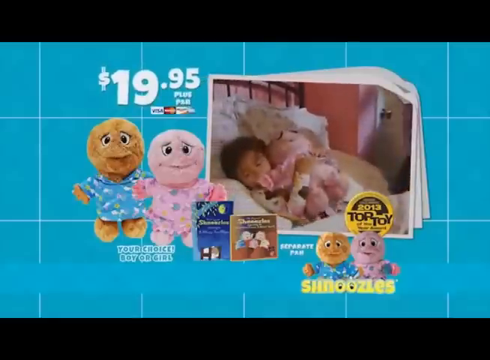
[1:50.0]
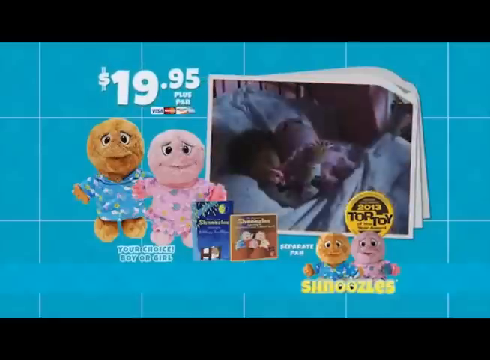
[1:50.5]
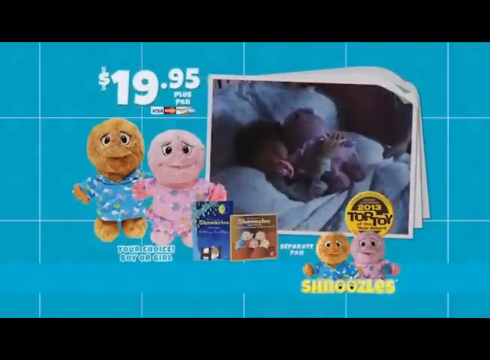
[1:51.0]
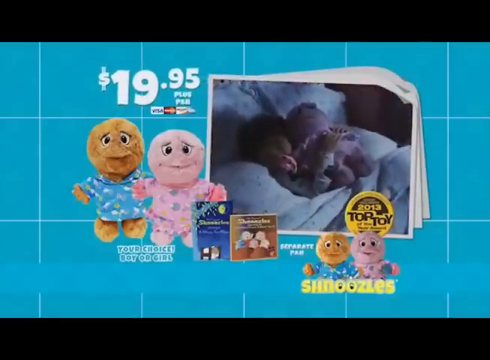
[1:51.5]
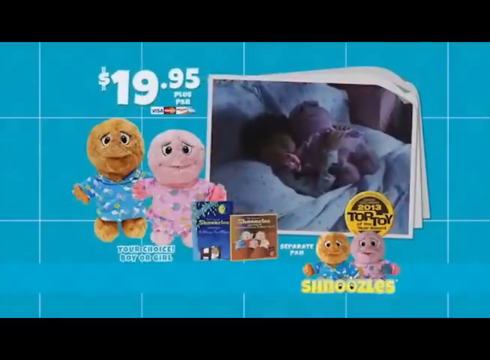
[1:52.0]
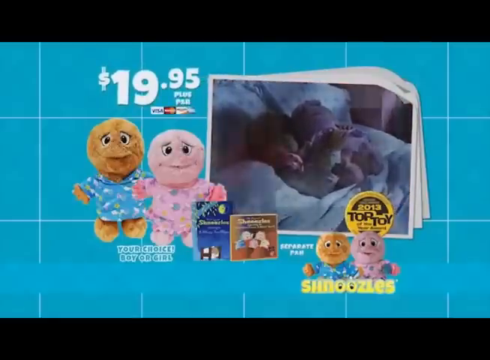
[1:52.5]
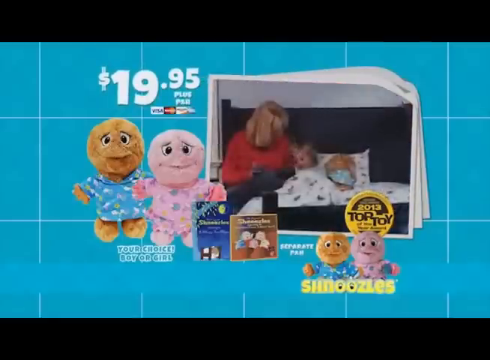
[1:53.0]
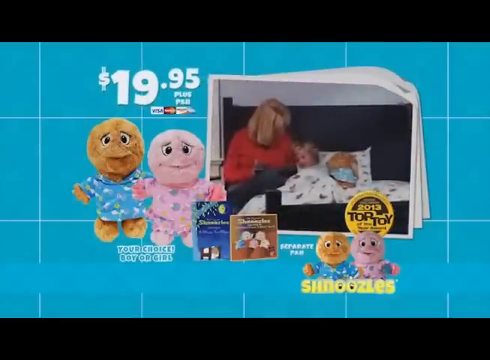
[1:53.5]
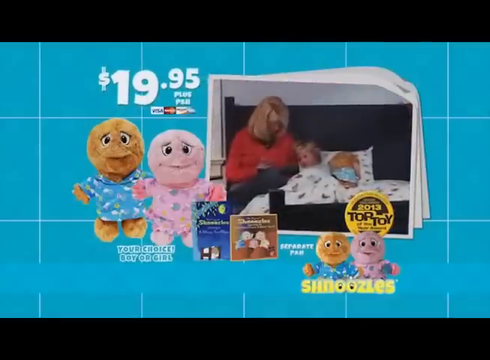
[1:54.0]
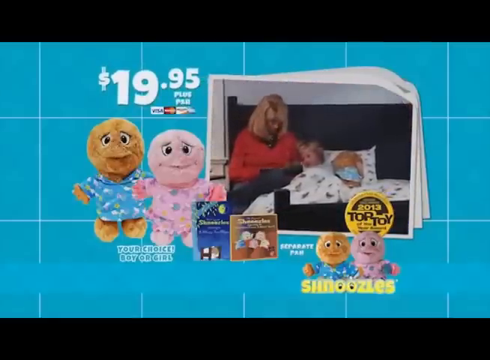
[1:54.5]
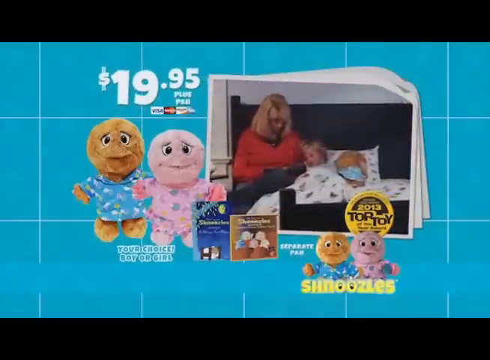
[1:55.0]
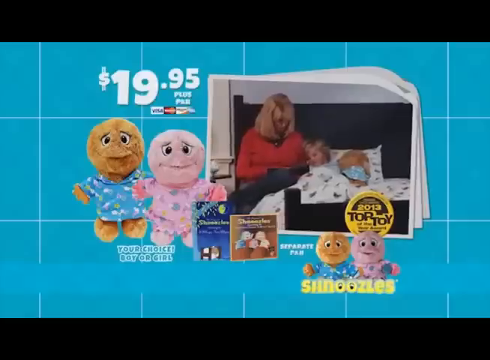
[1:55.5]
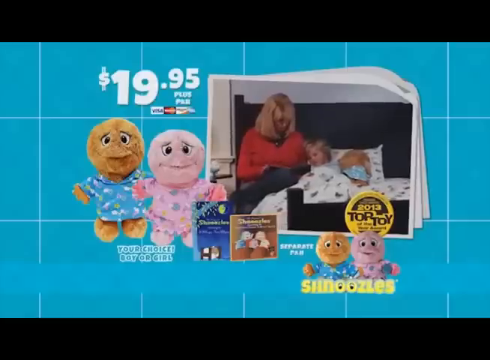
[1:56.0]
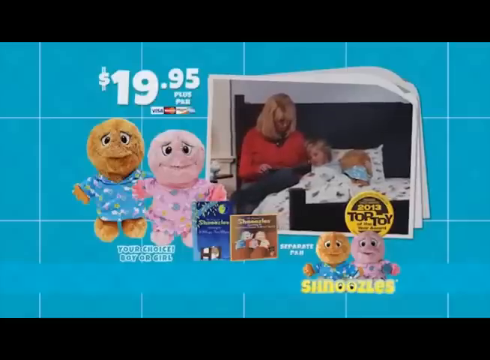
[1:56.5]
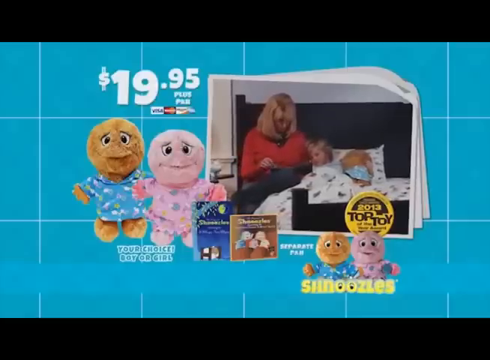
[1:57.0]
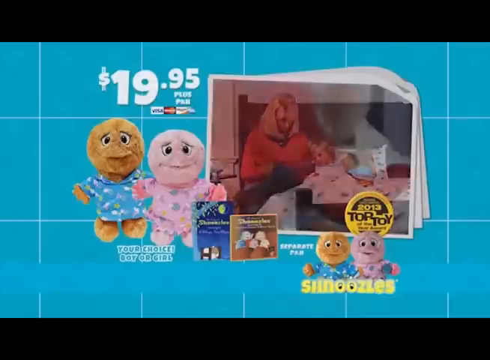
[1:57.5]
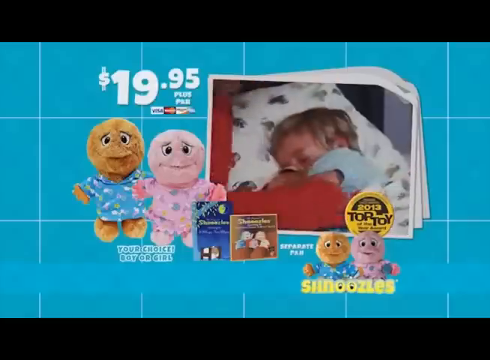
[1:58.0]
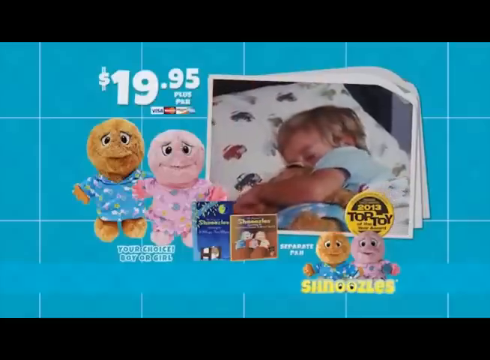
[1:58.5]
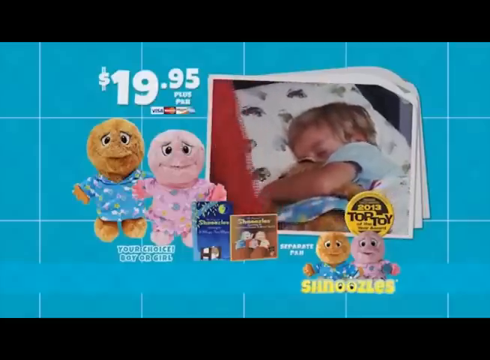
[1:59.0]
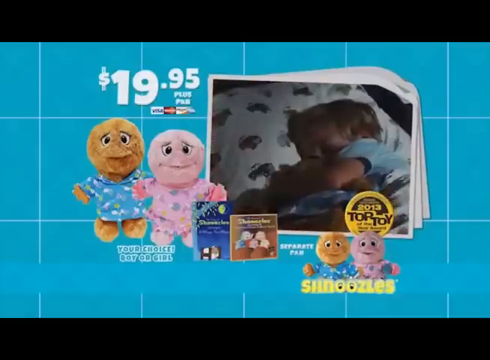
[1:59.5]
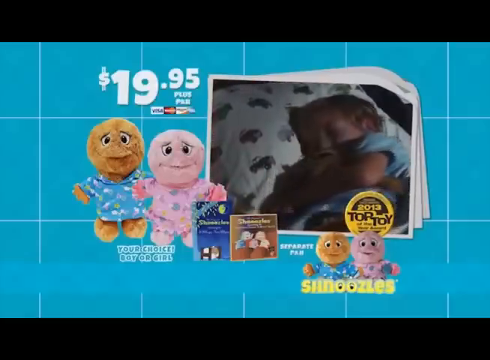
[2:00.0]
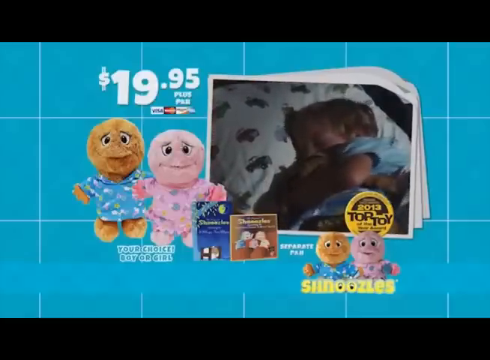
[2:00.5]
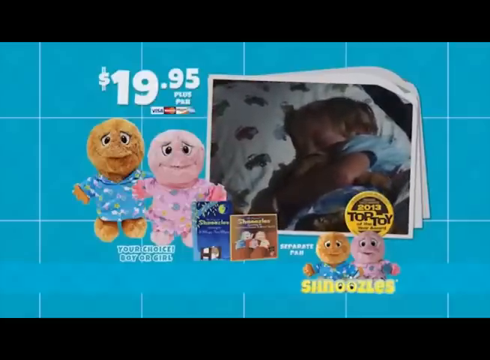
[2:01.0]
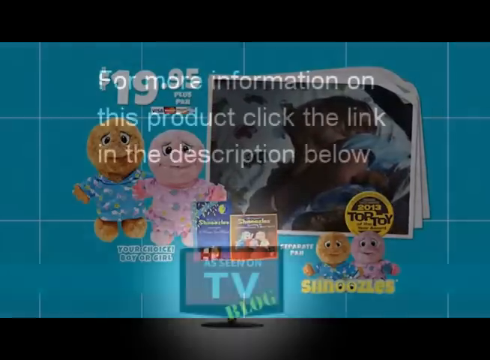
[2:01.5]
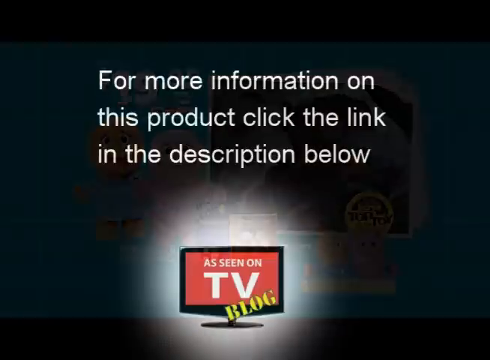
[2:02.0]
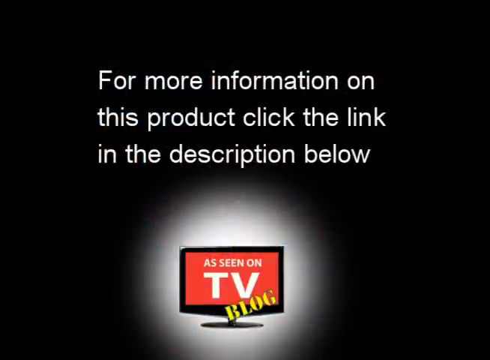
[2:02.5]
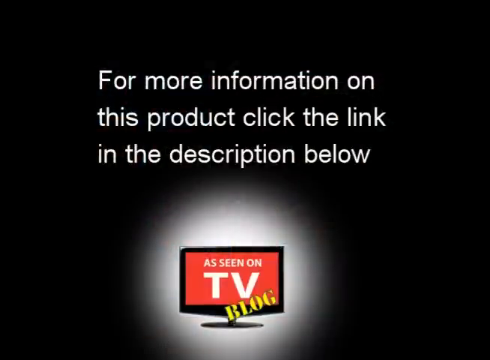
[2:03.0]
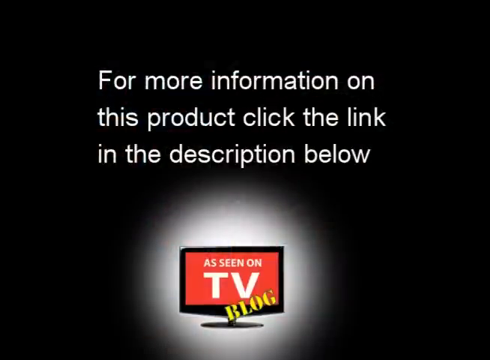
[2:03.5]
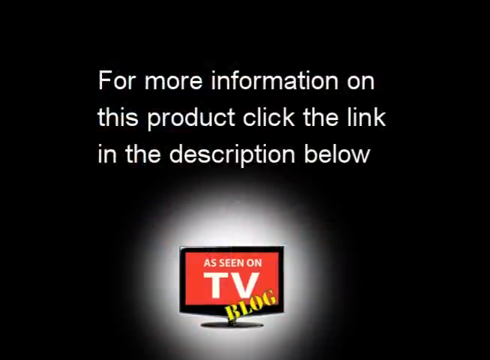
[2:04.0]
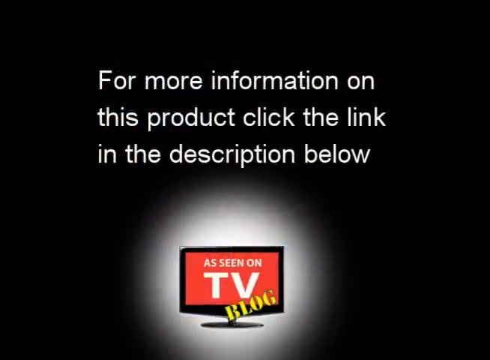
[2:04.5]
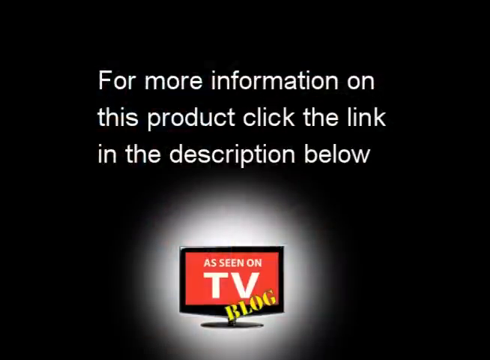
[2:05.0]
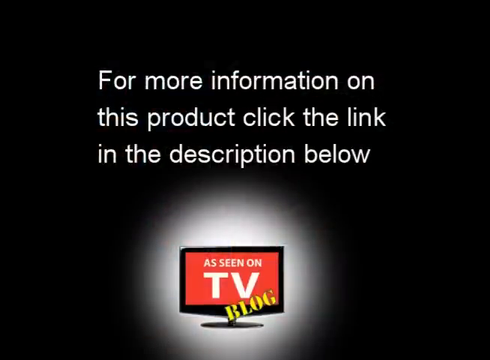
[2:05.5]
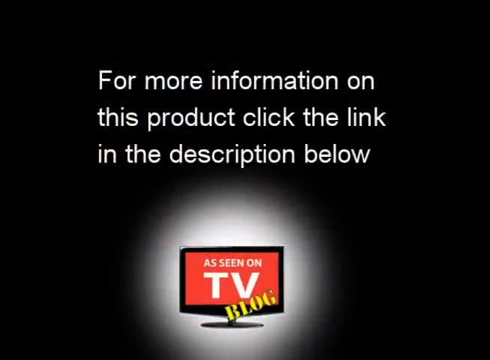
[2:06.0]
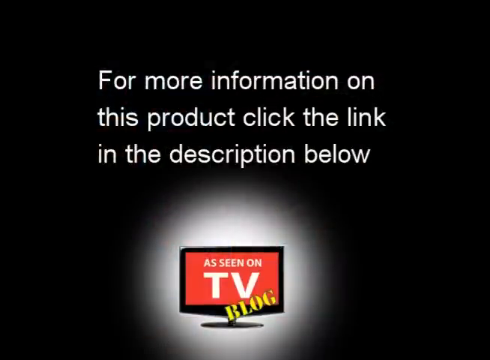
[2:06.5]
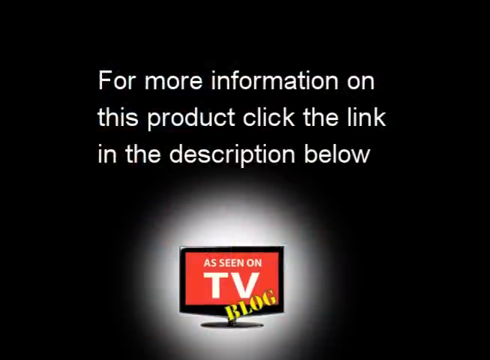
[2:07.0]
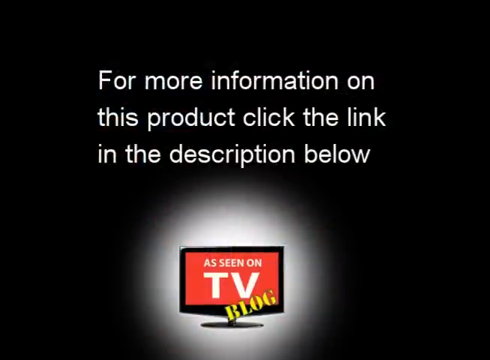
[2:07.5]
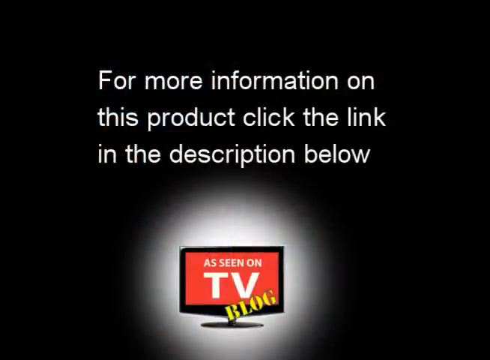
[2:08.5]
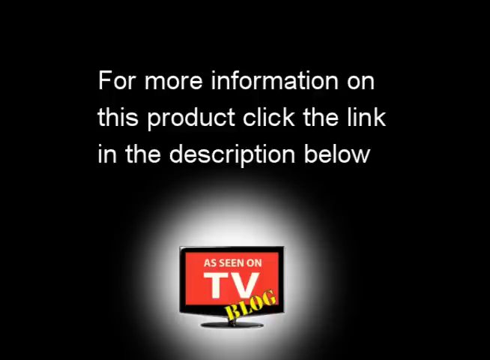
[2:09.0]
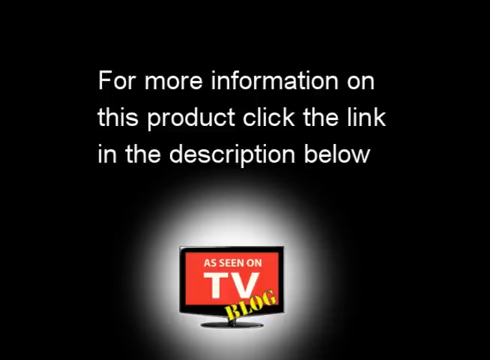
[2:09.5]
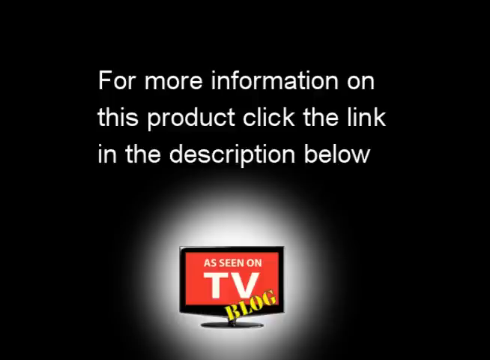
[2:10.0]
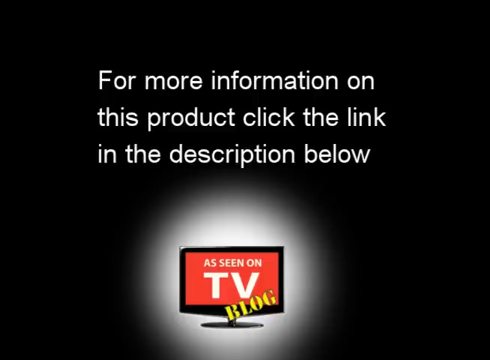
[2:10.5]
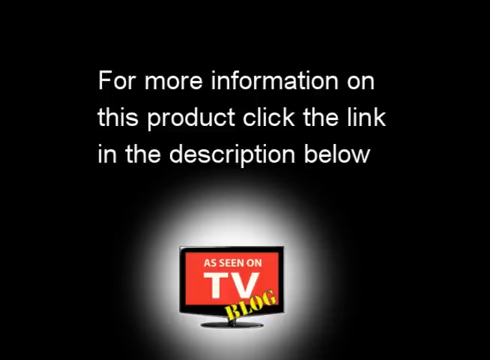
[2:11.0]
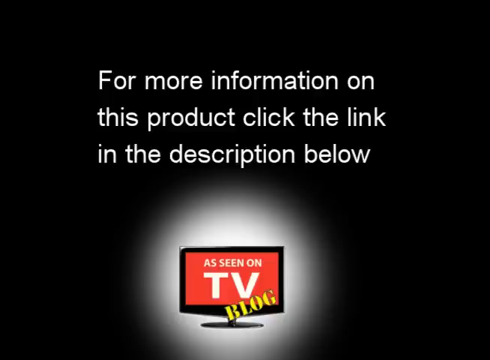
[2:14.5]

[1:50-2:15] A teal wall fills the background, kind of tiled, with lines running through it to make a checkerboard pattern in blue and teal. In the background, the video continues to play, showing earlier scenes of grandparents tucking their grandchild into bed, as well as mothers and fathers. The last page reads "for more information on this product, click the link in the description below". At the bottom is a black TV with a red screen and white text reading "as seen on TV blog". Then the whole background turns black with white print in the middle.